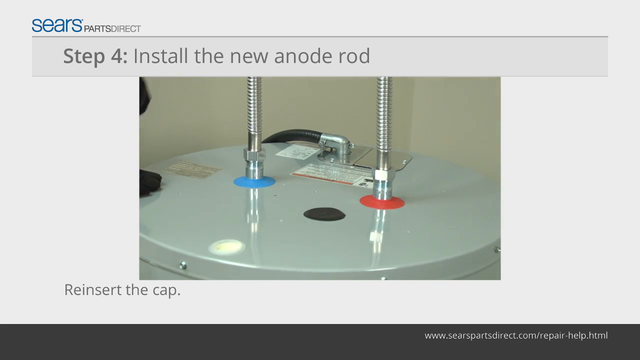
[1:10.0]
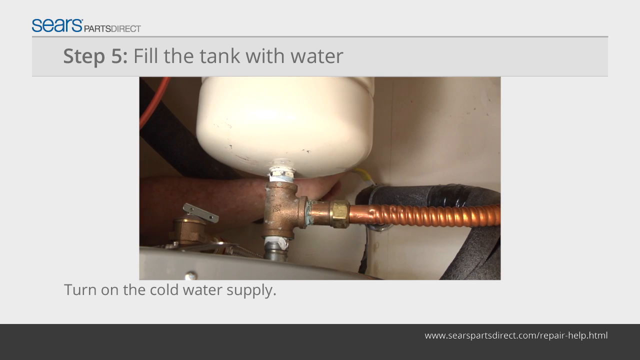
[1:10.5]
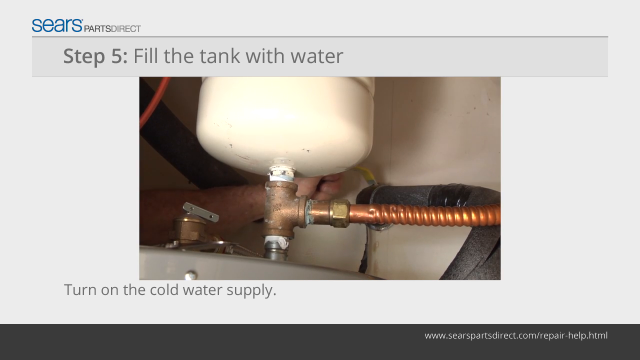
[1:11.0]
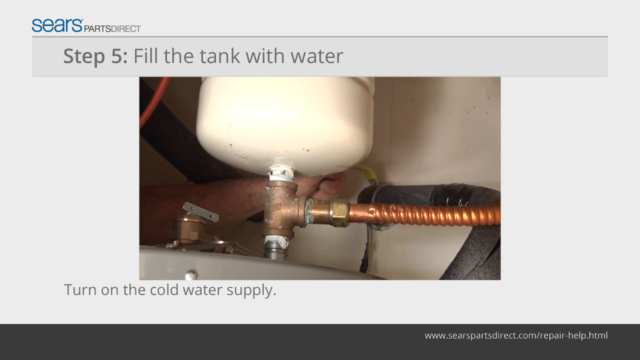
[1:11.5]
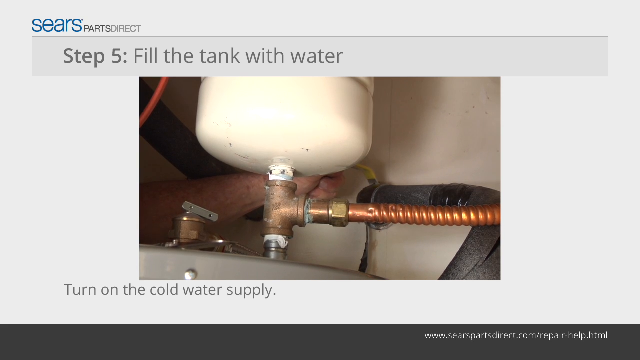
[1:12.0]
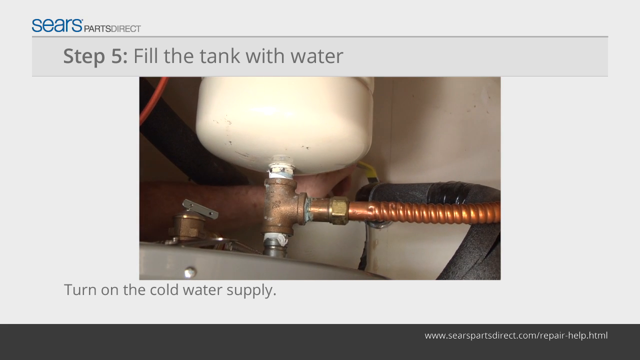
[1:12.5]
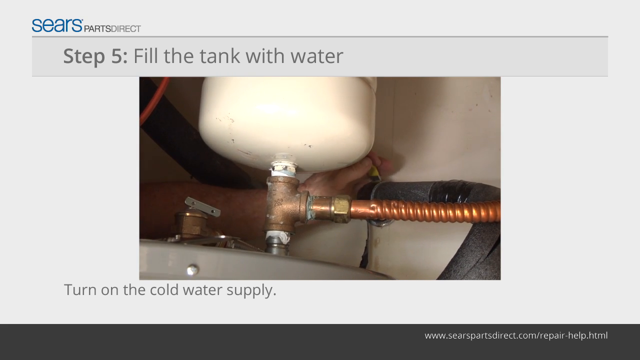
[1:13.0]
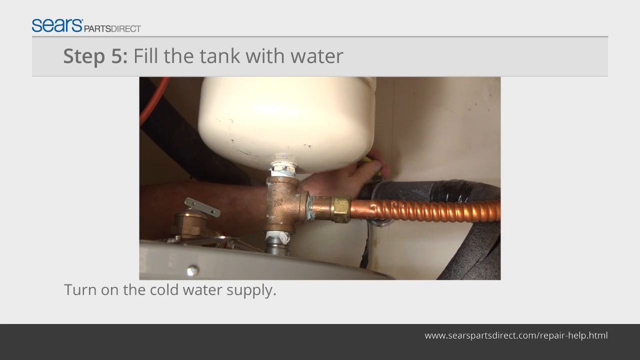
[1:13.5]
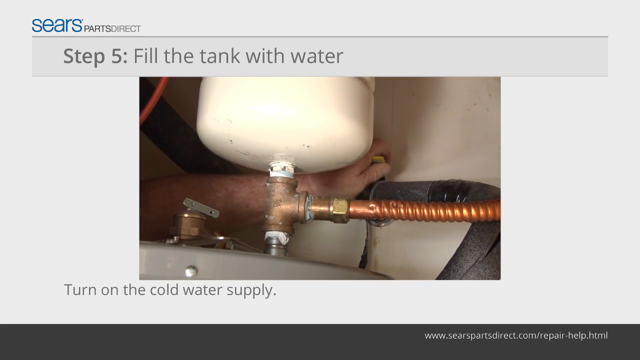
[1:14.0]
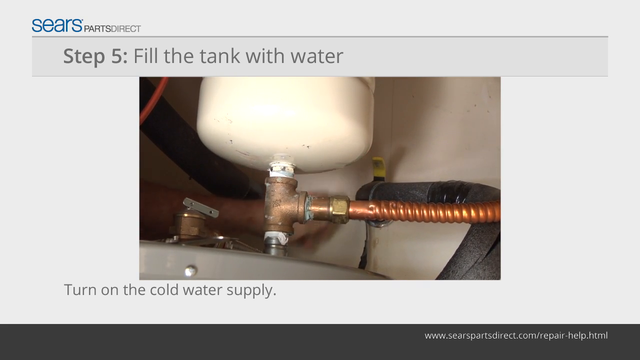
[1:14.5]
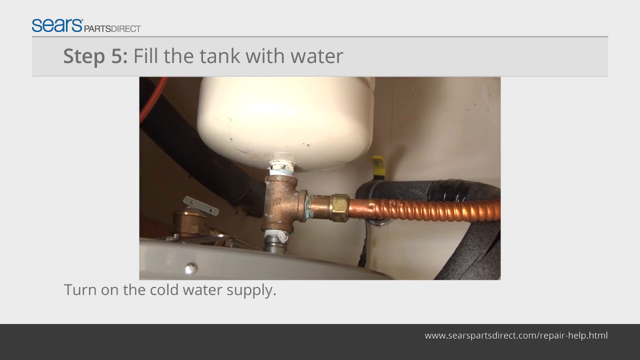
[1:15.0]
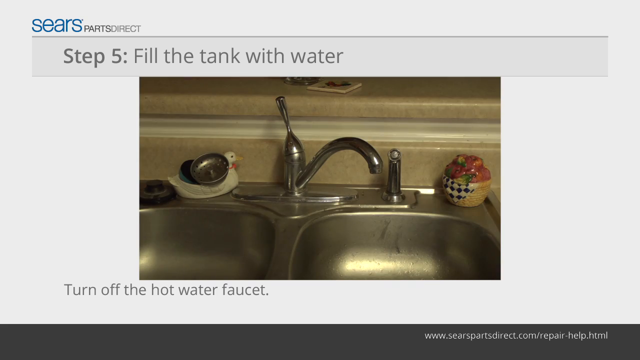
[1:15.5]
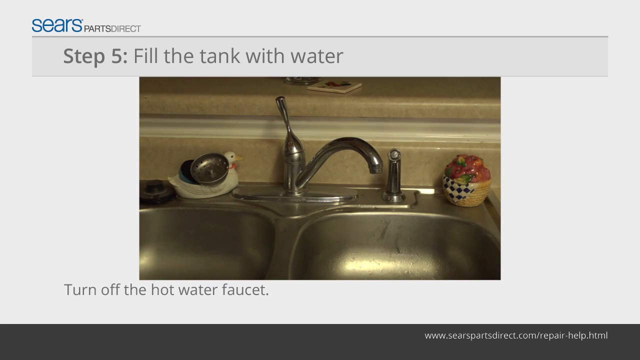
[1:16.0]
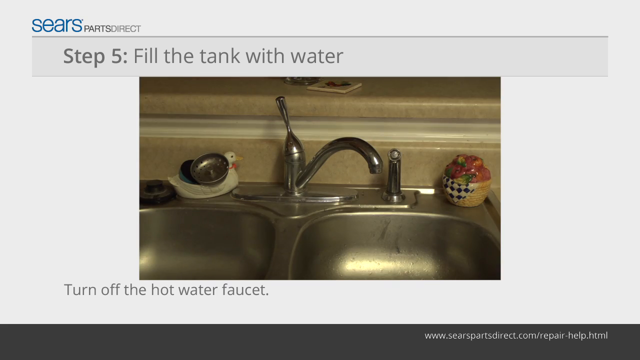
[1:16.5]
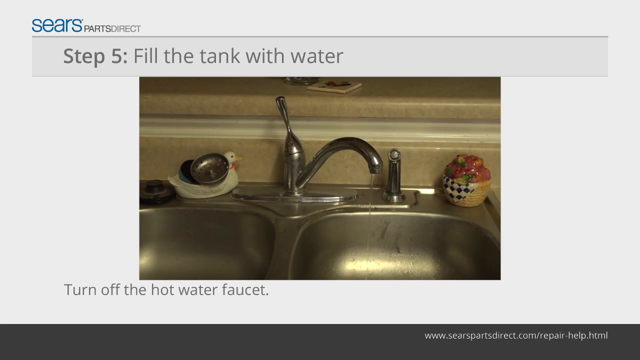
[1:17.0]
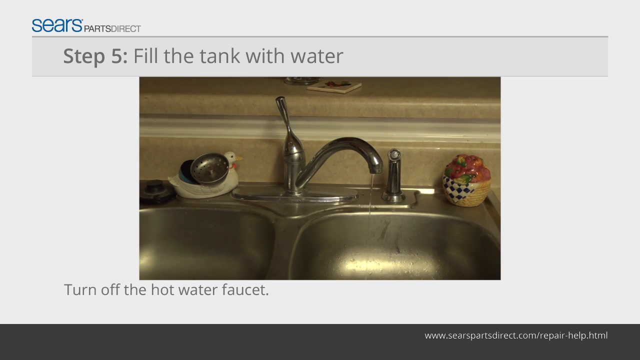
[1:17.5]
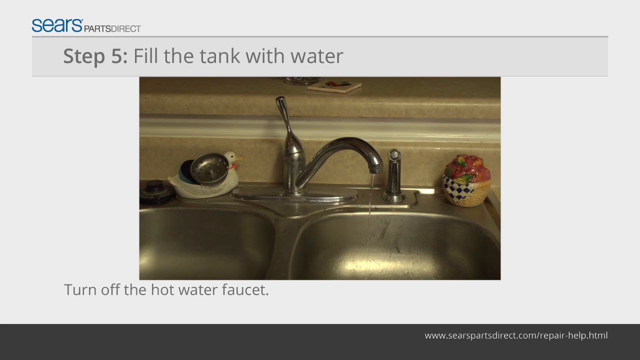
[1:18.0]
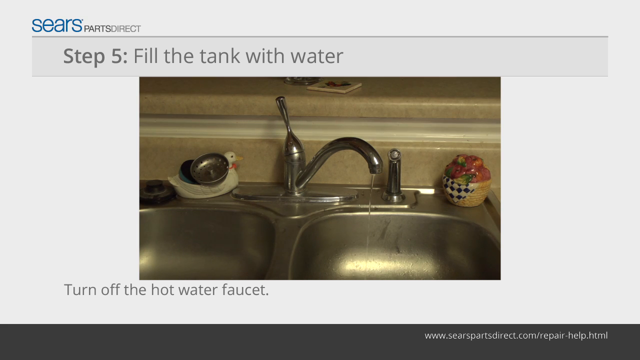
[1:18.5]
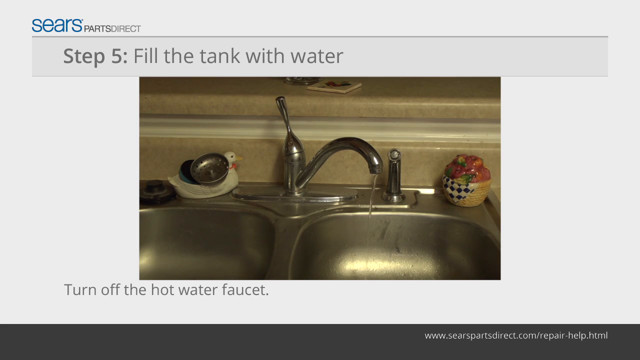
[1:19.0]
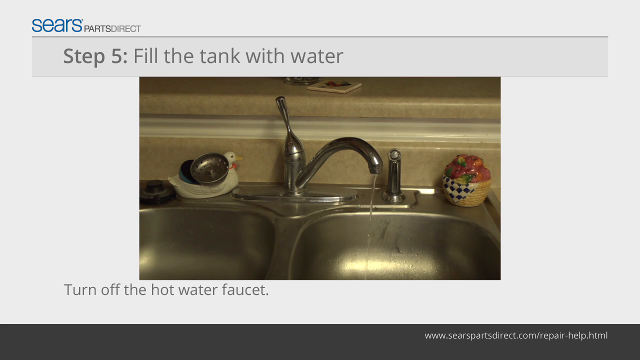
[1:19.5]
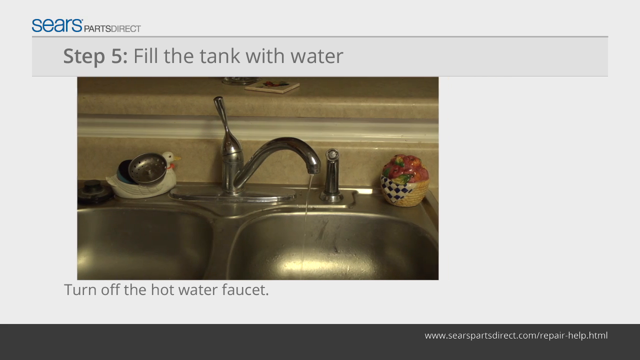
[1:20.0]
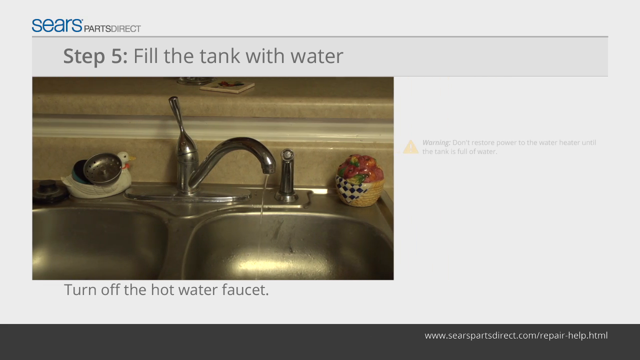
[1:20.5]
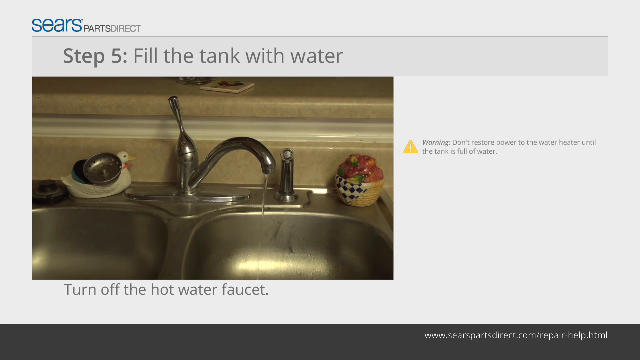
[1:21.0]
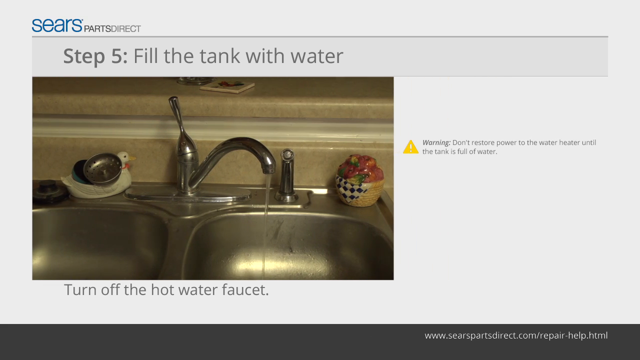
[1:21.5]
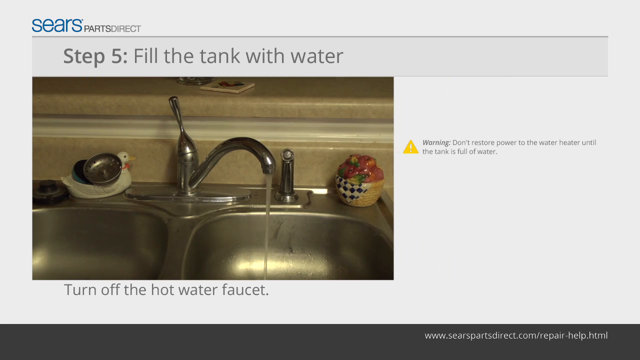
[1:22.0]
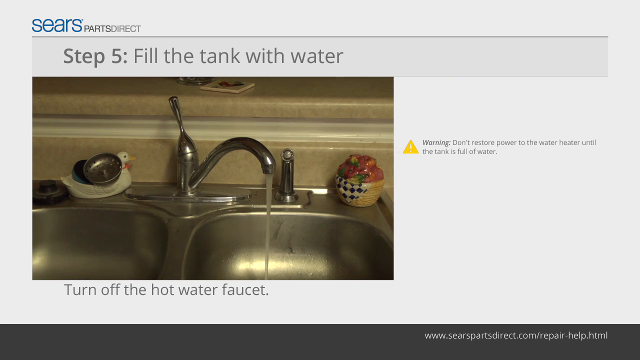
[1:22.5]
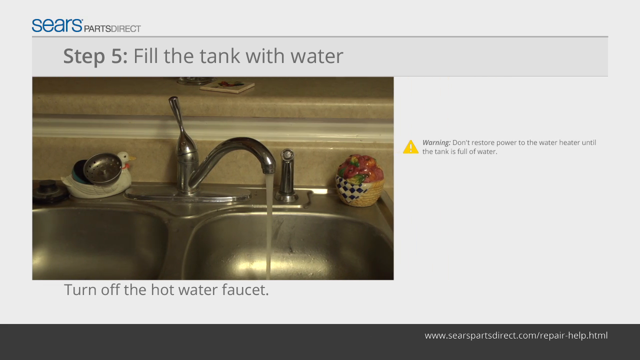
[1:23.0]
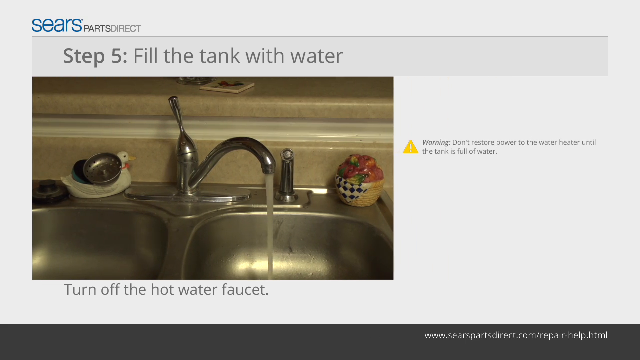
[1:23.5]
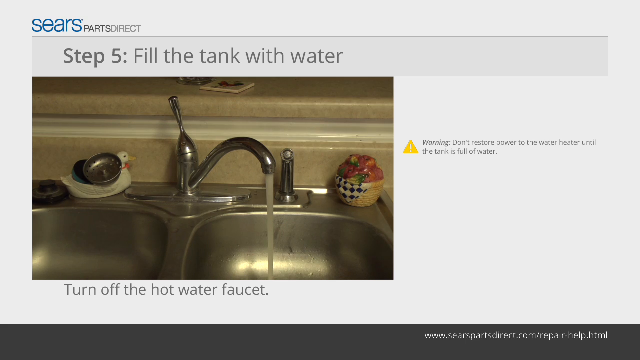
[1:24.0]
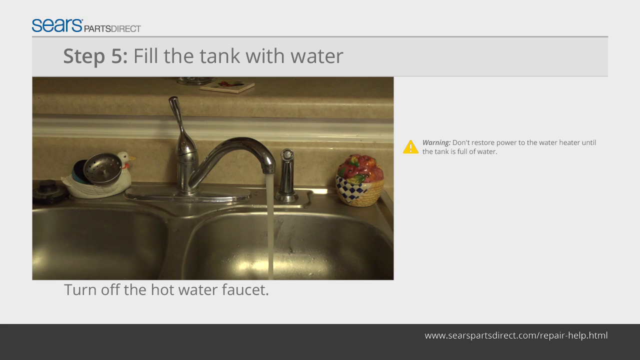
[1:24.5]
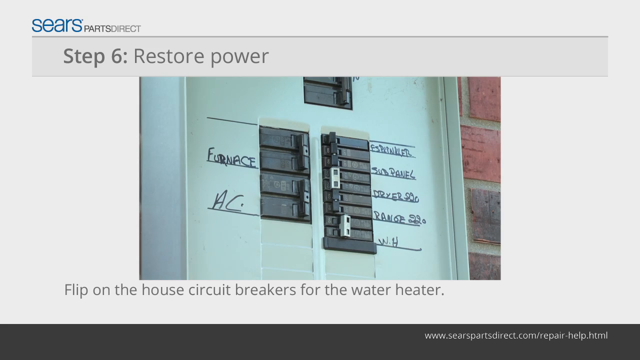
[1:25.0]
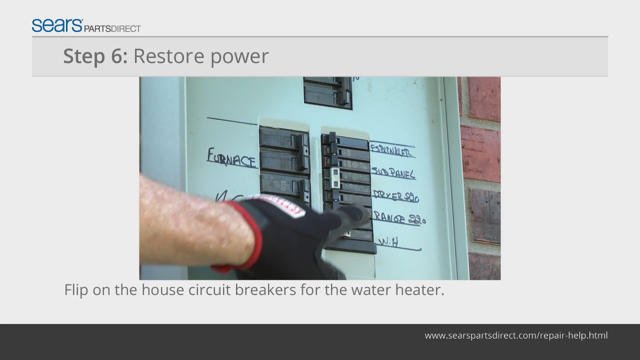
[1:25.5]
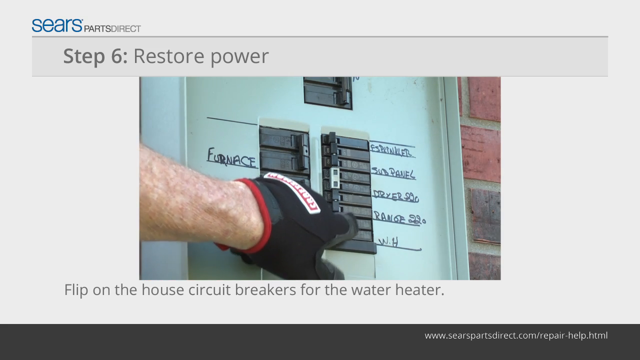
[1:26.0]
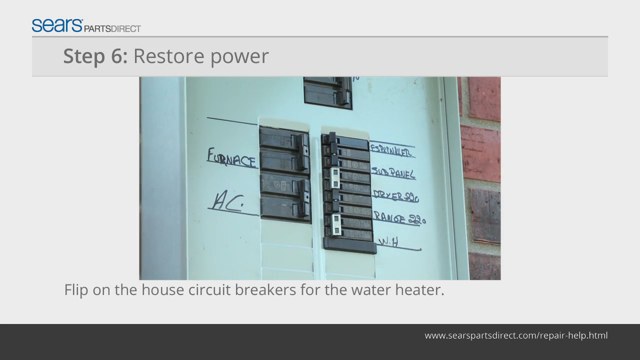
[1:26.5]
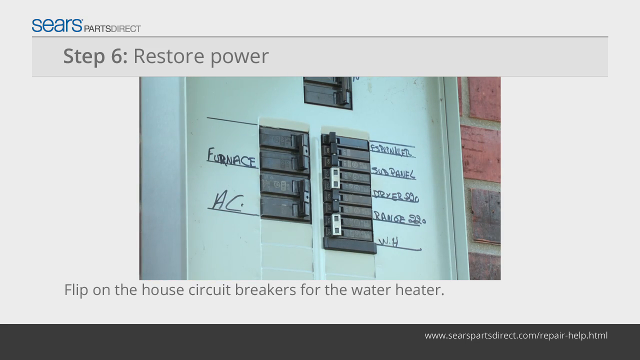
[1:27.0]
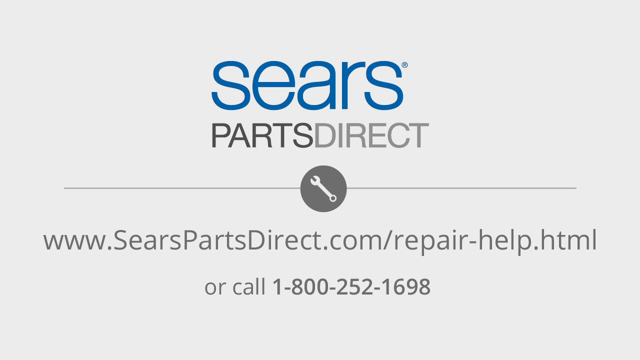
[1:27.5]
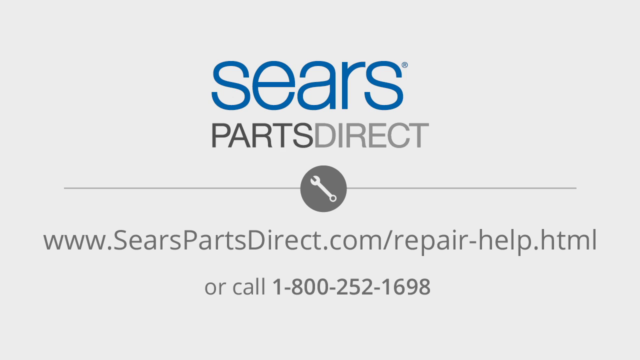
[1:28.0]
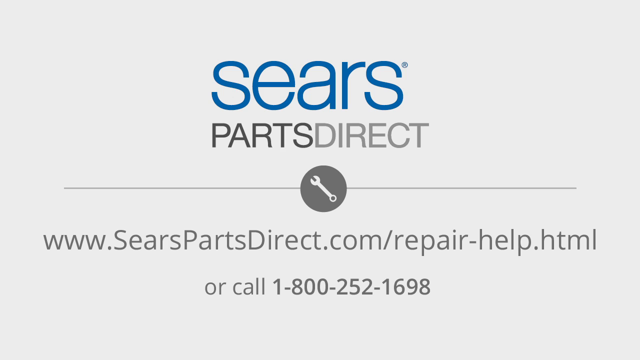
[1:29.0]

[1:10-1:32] The cap is put back on where the new anode rod was installed. The screen is still all gray with Sears Parts Direct at the top in the same font, and says "step five", filling the water tank. A picture shows the water supply to the hot water tank and a person turning the cold water supply back on. Another screen shows the sink with the hot water faucet, with instructions to turn it off; it does not show this being done and has no hand, just a picture of the water. A warning then appears saying not to turn the electricity back on to the water tank until it is completely full. Step six is restoring the power: the electrical panel is shown with a gloved hand flipping the circuit breaker for the water heater back on. An ending screen, all gray, says "Sears Parts Direct", has a wrench in the middle, and gives a website to visit about repairs, and apparently a way to call for help.